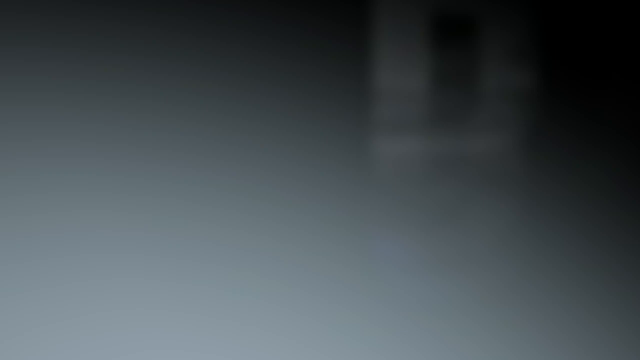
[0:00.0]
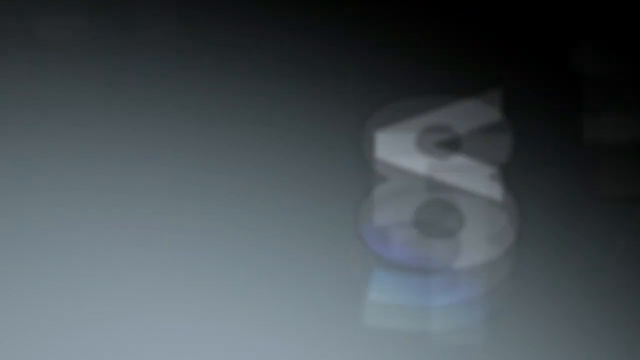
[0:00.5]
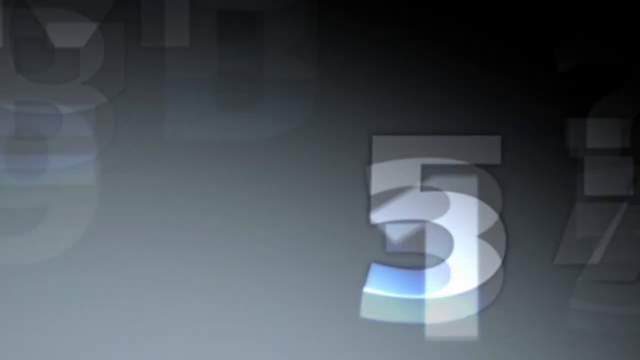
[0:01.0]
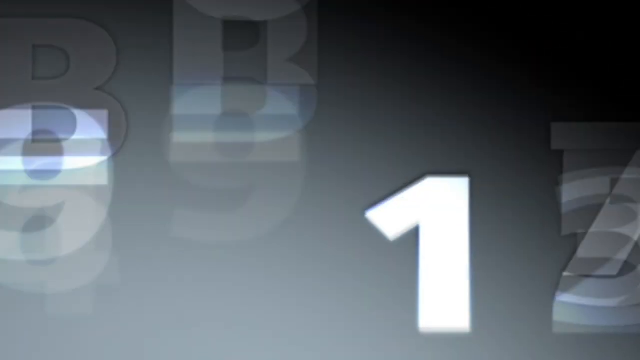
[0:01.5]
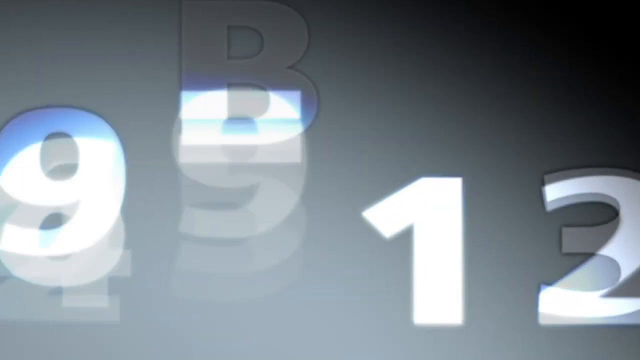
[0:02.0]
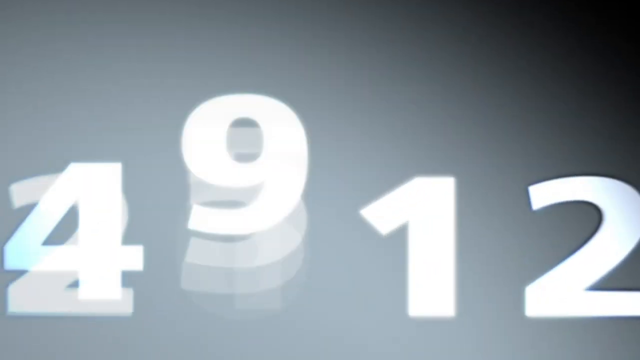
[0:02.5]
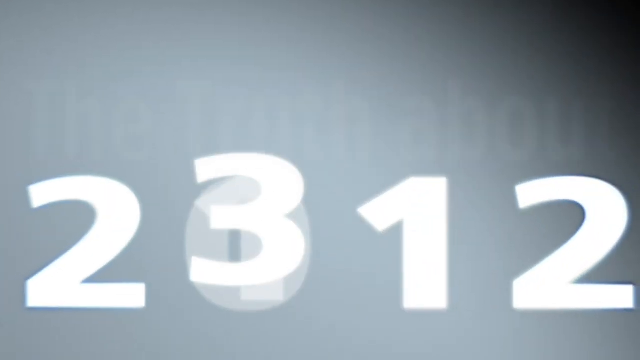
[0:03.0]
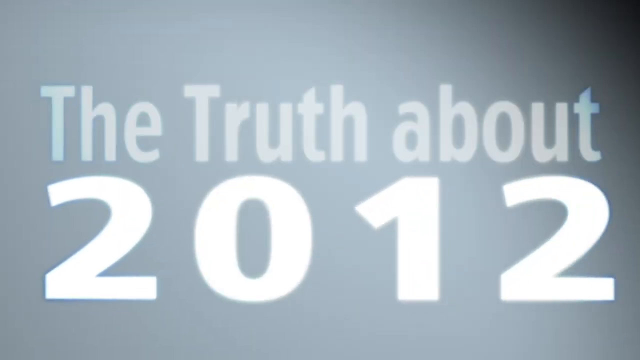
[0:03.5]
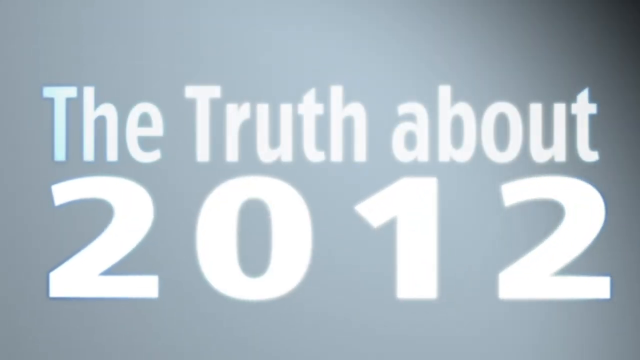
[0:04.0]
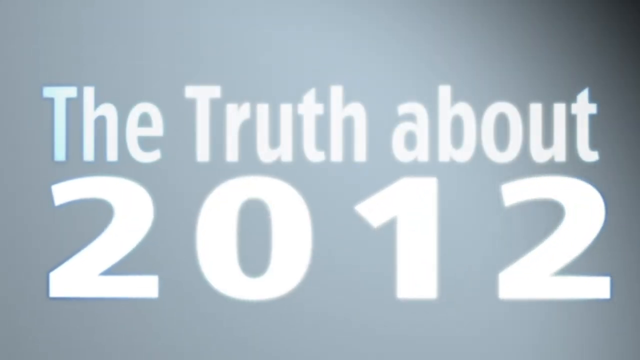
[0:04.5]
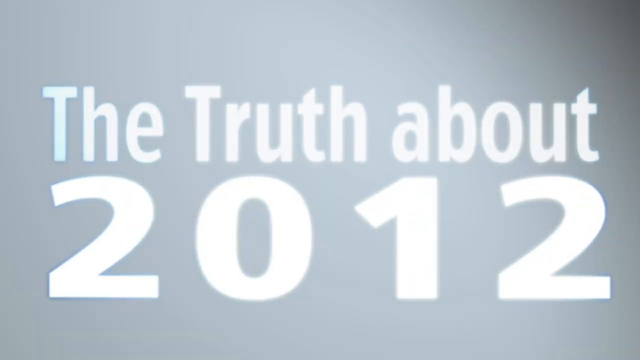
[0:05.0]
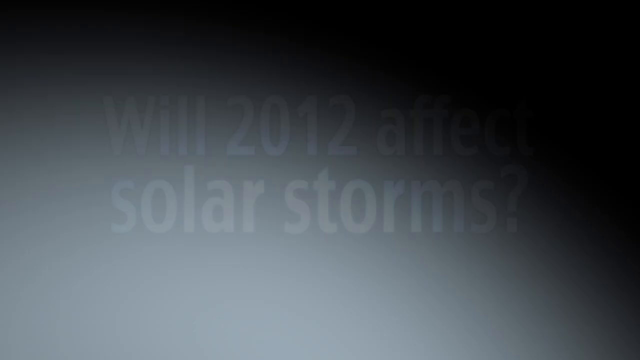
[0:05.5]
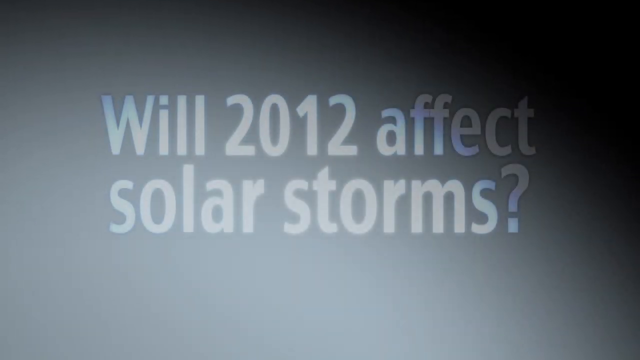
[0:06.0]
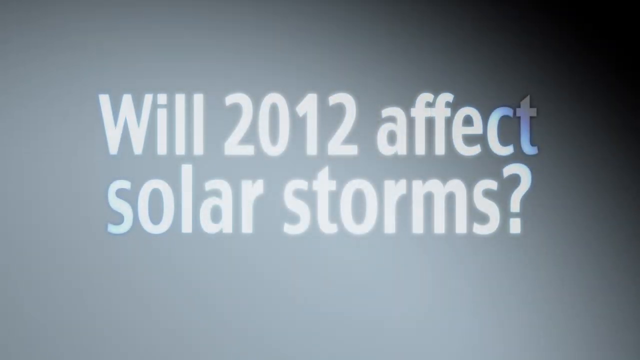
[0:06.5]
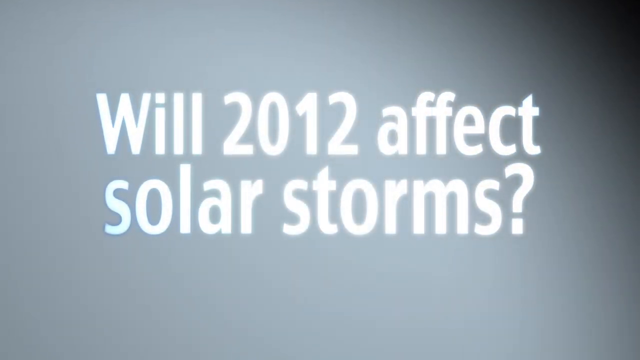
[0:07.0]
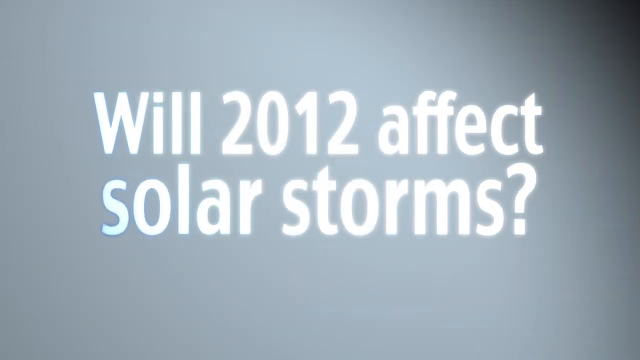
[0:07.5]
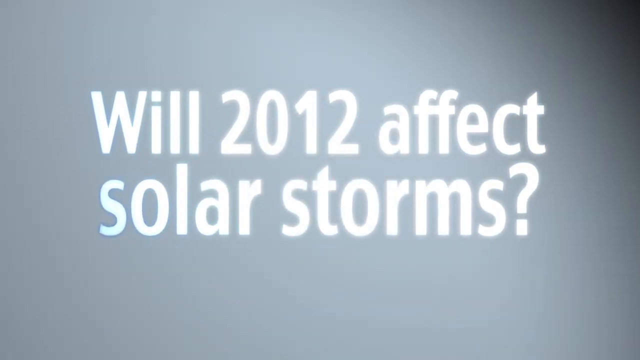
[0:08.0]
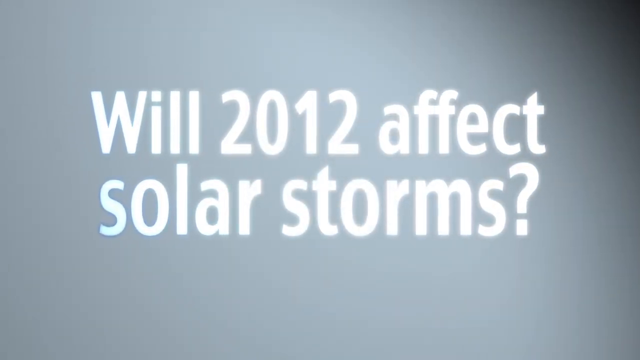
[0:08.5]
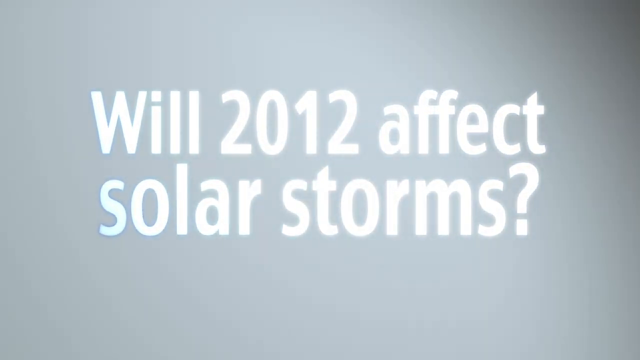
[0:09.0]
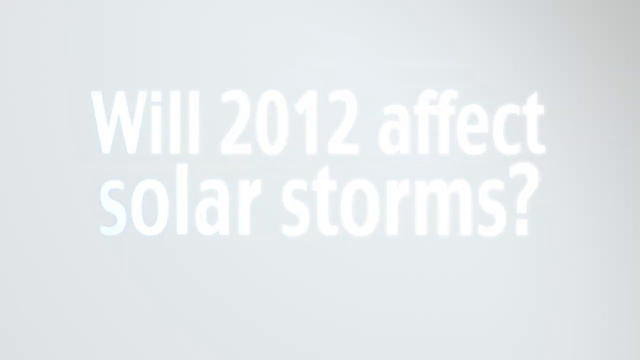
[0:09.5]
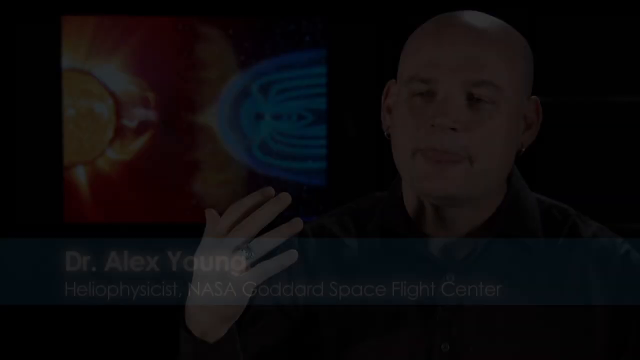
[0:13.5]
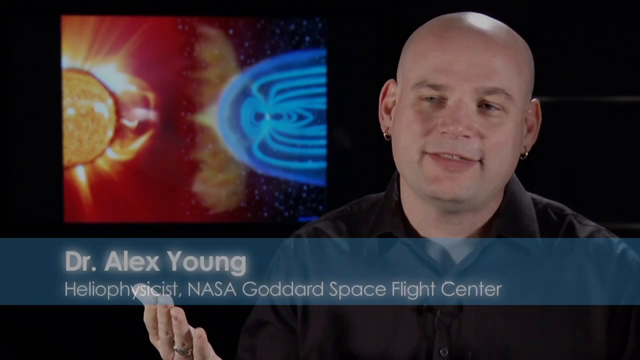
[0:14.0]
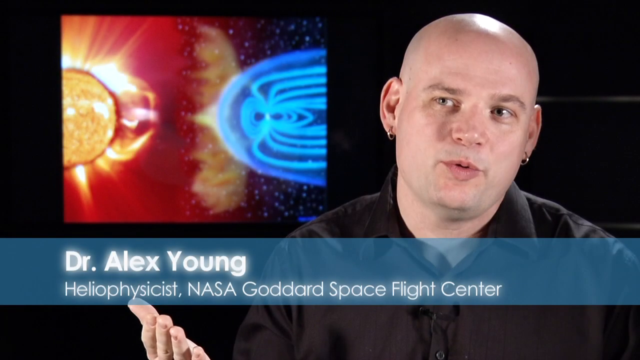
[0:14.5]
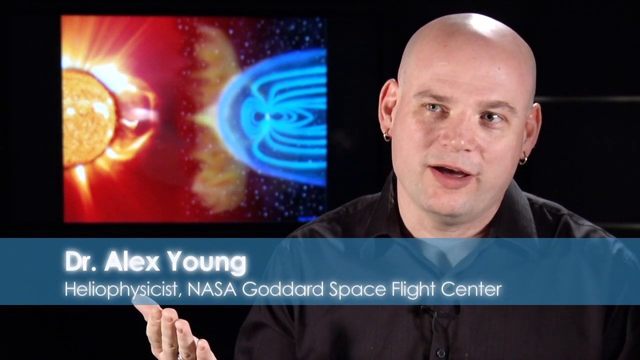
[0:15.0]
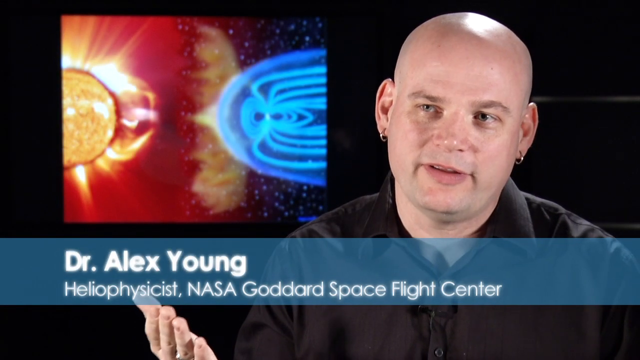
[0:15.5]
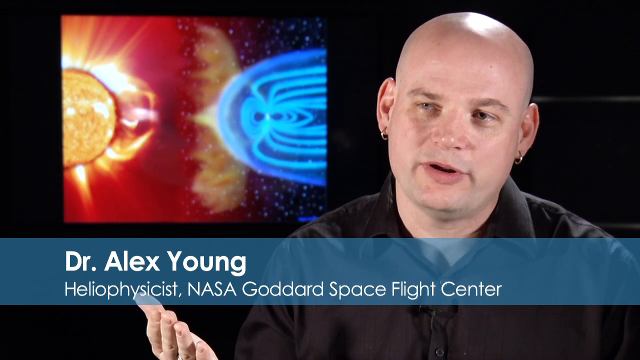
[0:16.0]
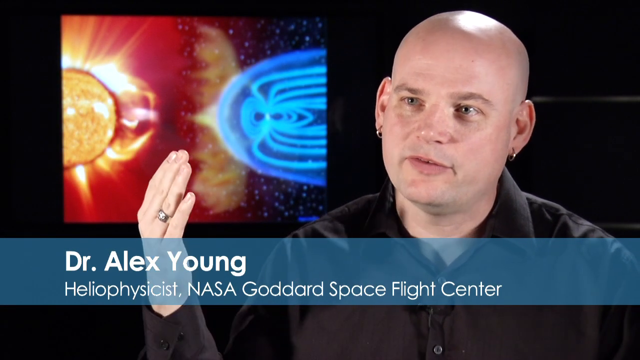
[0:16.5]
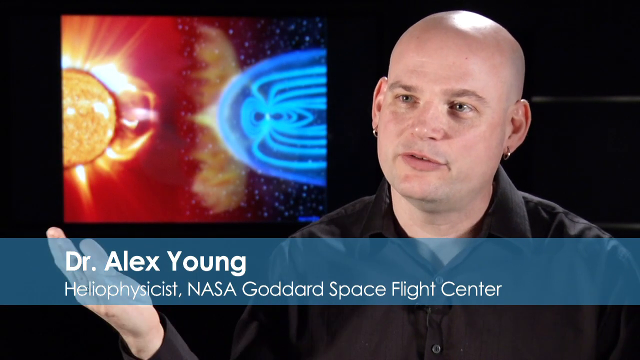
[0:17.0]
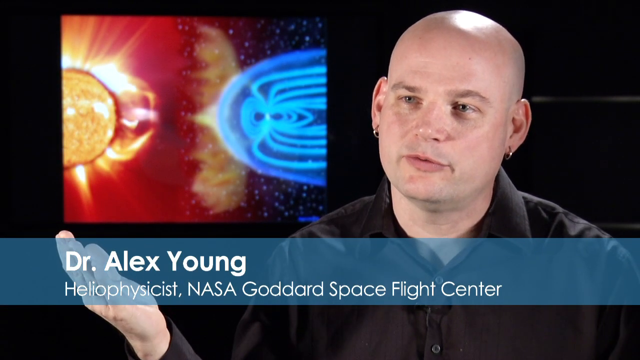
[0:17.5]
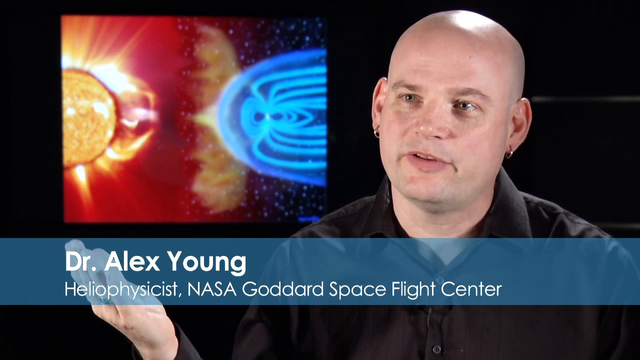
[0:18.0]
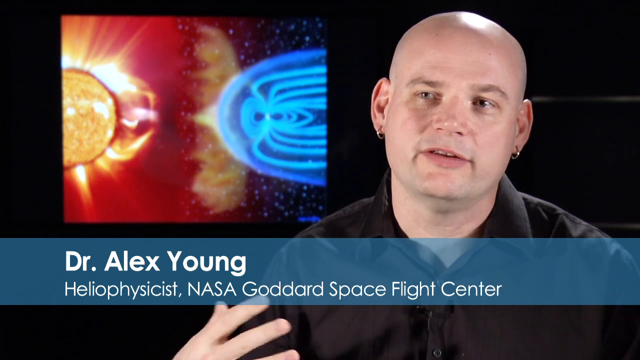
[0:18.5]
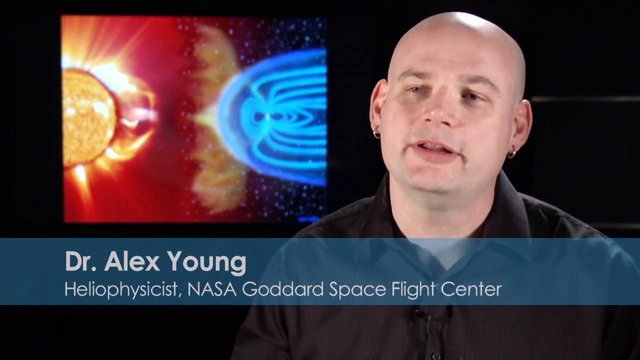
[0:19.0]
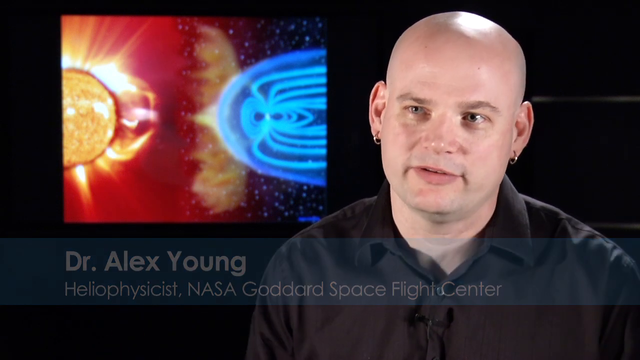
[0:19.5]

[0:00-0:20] Moving numbers appear against a background that looks gray, then "2012" appears, followed by the title "The Truth About 2012." Next, the words "Will 2012 Affect Solar Storms?" appear in the middle on a light gray background. The screen becomes very bright and white, then everything turns black. A man is then talking on the right side. Text below him gives his name, "Dr. Alex Young," along with a description identifying him as a heliophysicist who works for NASA at the Goddard Space Flight Center. He talks with his right hand raised, looking to the left. He is bald, wears two hoop earrings and a black shirt. The background behind him is black, and a picture on the left side of the background appears to show a solar flare being emitted by the sun: the sun is on the left, and to the right is a blue structure that looks like a bunch of lines moving away from the sun toward the right.